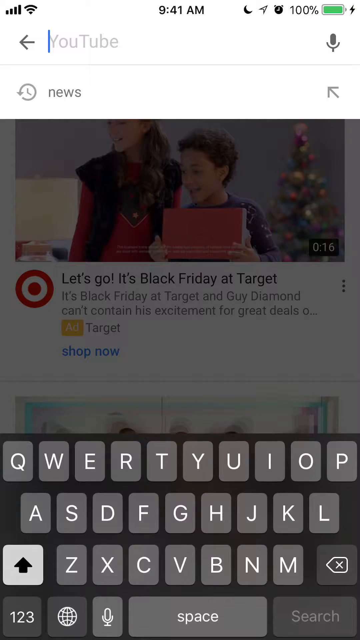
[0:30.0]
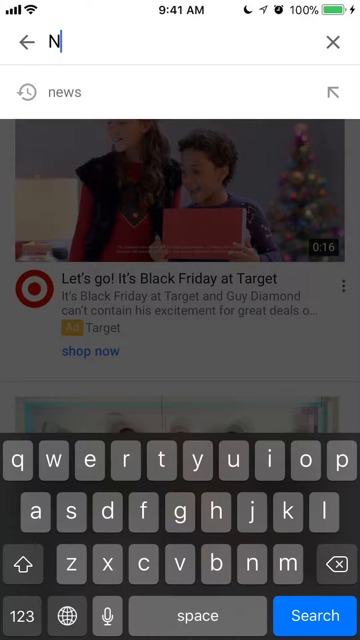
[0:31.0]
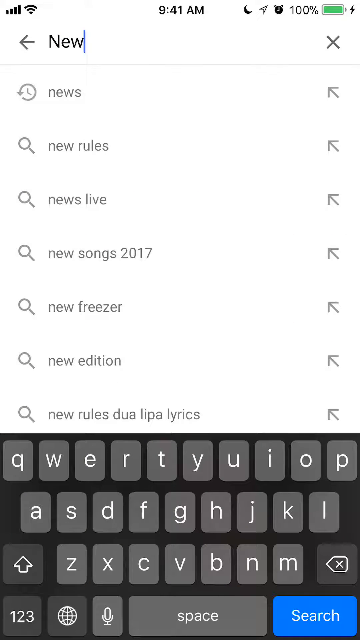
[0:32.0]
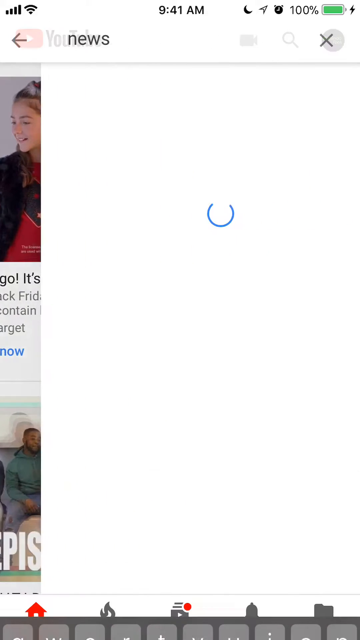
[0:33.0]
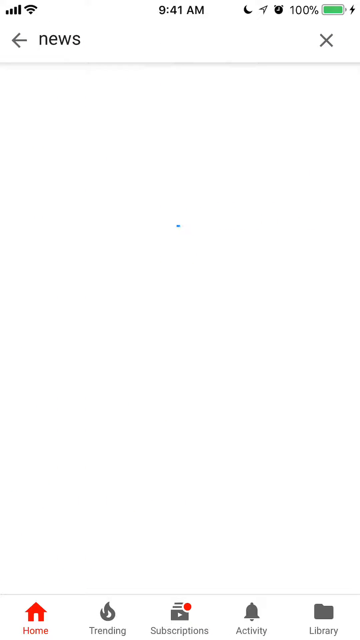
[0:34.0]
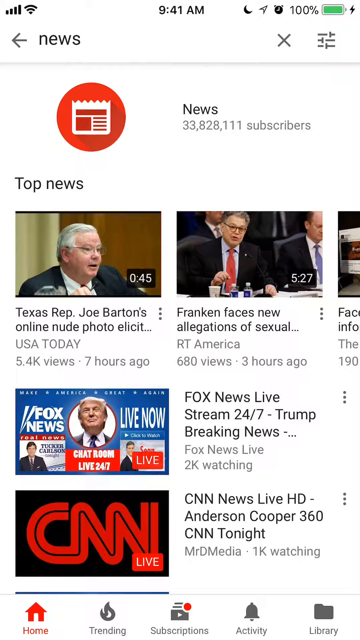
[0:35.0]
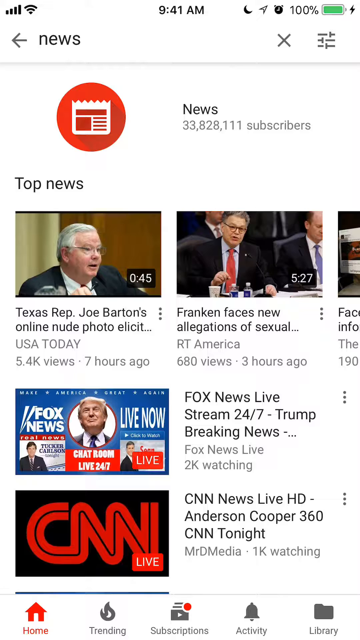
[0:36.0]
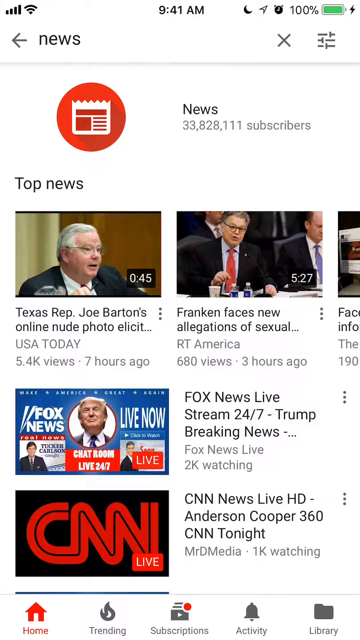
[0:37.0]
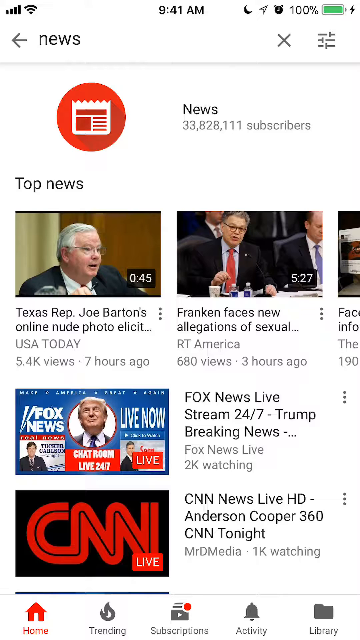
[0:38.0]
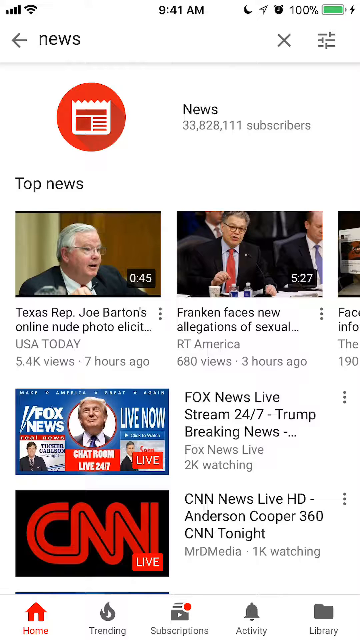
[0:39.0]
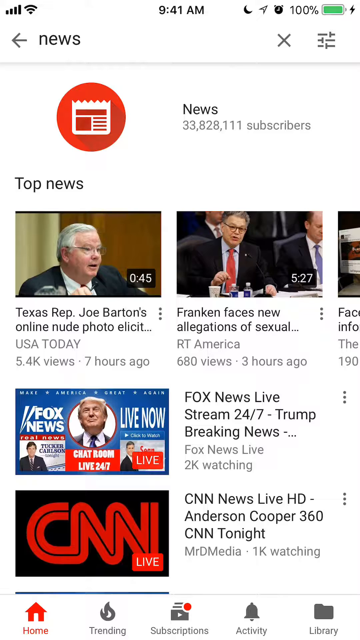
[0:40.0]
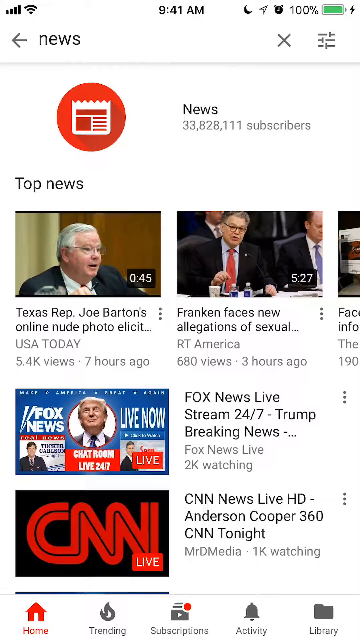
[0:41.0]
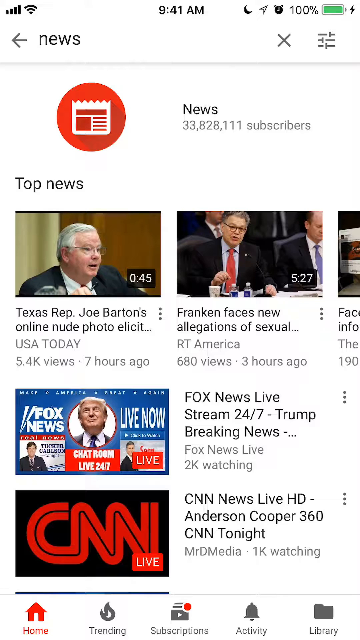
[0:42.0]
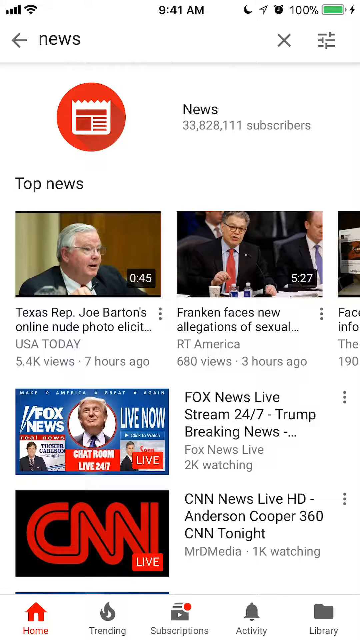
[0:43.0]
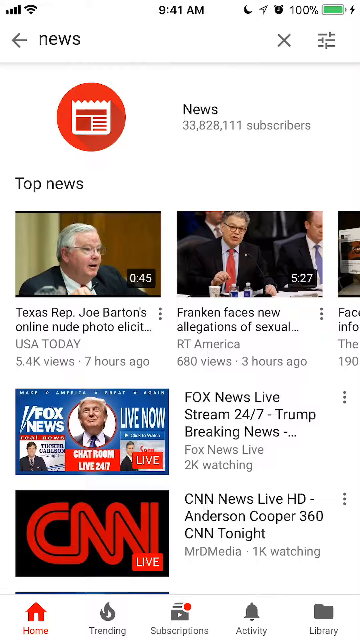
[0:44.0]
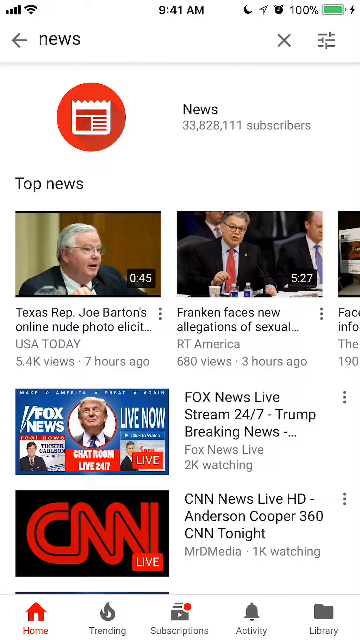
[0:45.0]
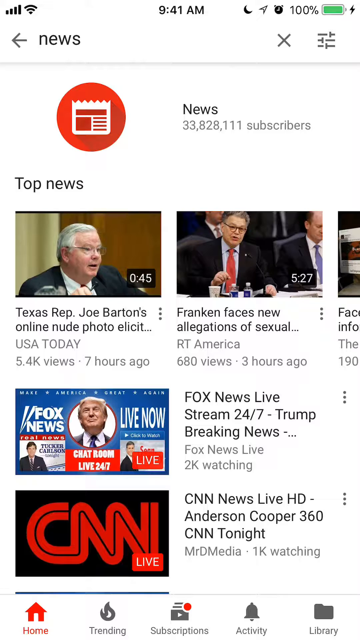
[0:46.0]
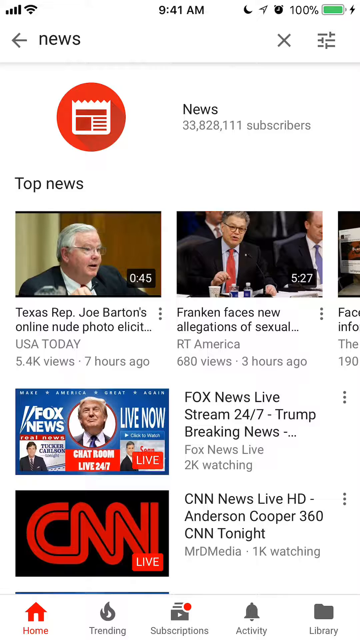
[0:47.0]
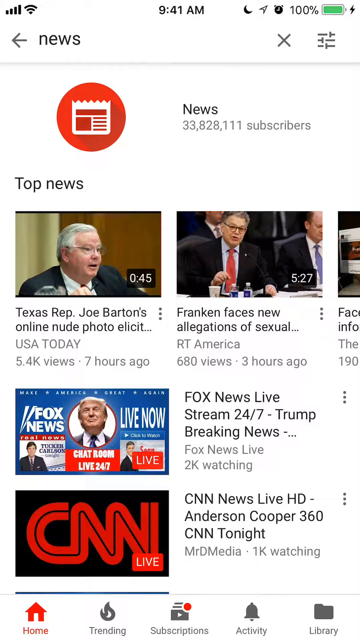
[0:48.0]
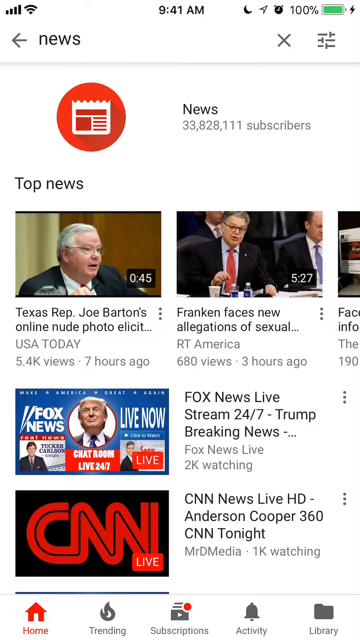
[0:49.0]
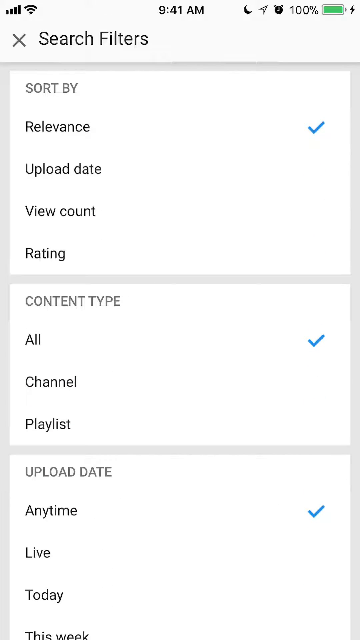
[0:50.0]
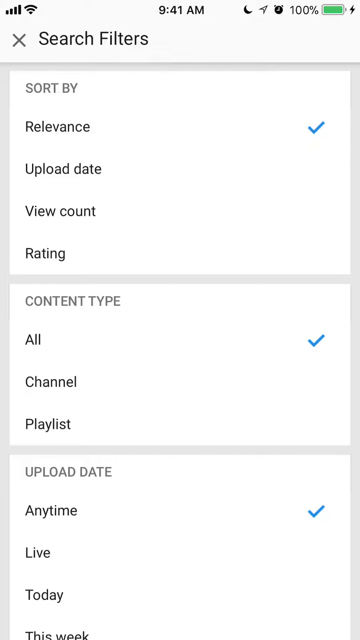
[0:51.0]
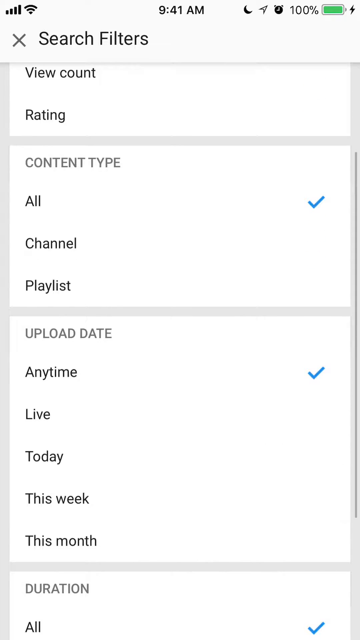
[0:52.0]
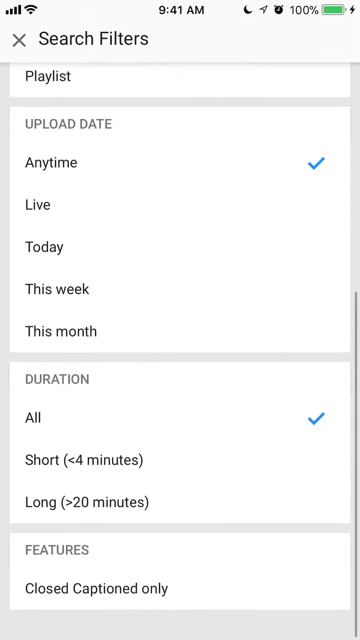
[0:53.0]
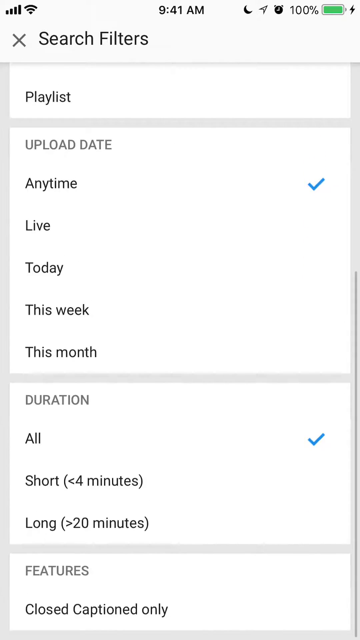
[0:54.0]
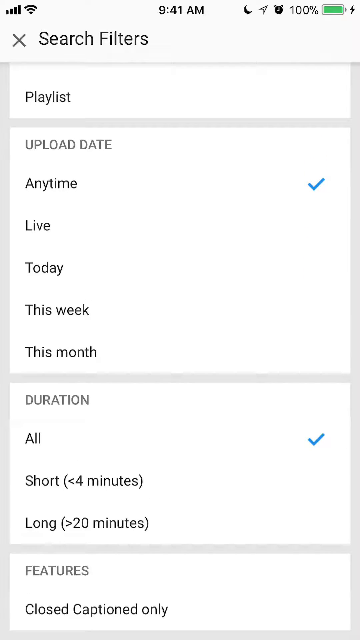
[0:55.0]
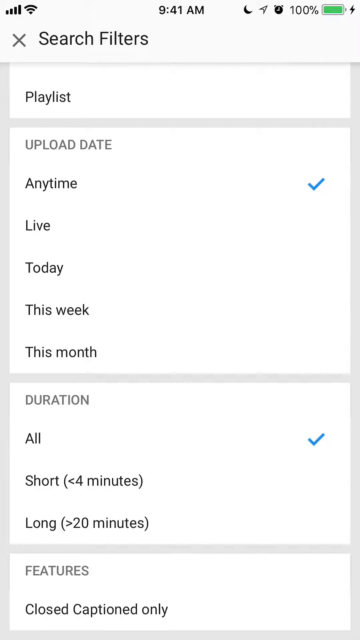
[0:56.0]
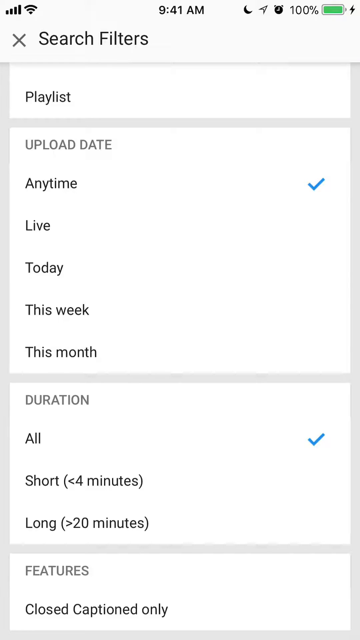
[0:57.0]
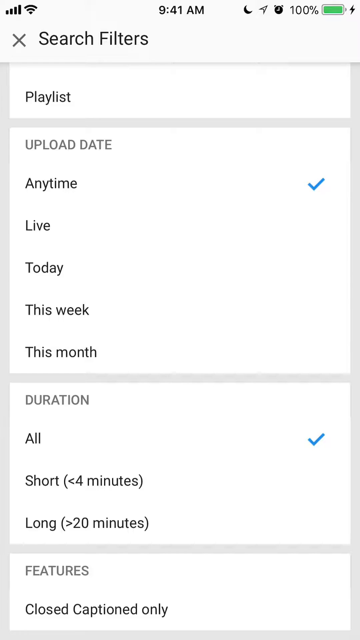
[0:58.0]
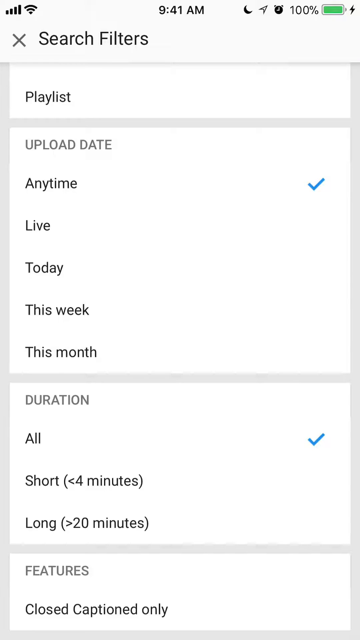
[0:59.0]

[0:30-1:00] The YouTube search bar is open with one suggestion from a previous search, "news". The keyboard is still open and in dark mode. The man types "news" into the search bar, and news appears with various subscribers. Results include a video about Texas rep Joe Barton's online nude photo and one beginning "Franken faces new allegations of sexual". Next comes Fox News Live streaming 24-7 with breaking news about Trump, and CNN News Live HD, Anderson Cooper 360 and CNN Tonight. The CNN logo is red on a black background and says "live". The Trump preview shows Trump's face with "Fox News" to the left of it and "Live Now" to the right. The other videos show previews: the Texas rep video shows a grey-haired man, and the Franken allegations video shows an oldish man with a red tie and a man next to him with a blue or purple tie.